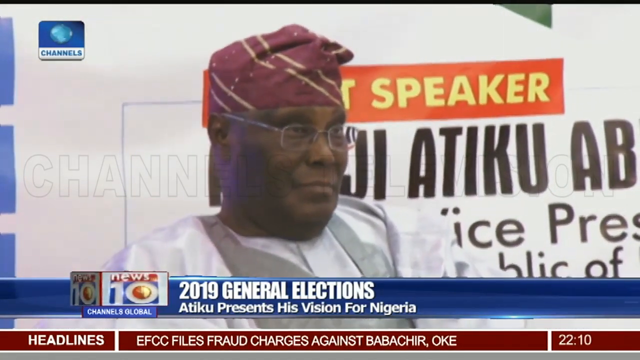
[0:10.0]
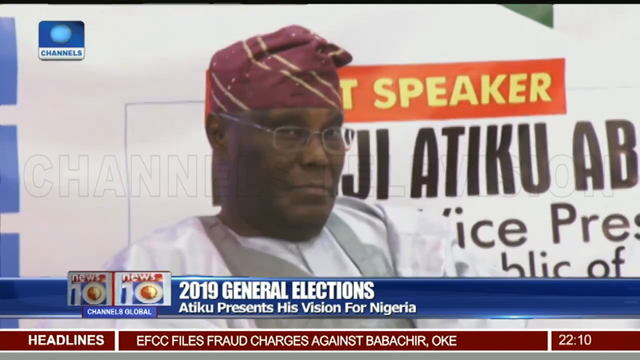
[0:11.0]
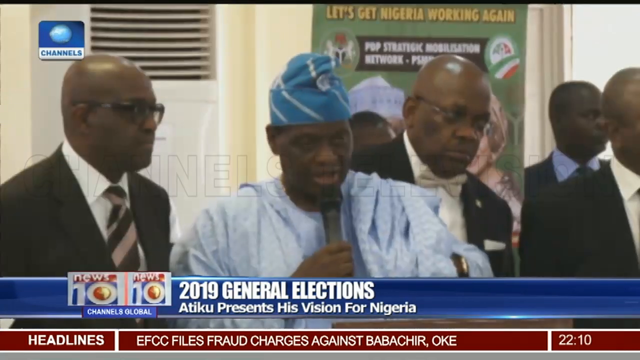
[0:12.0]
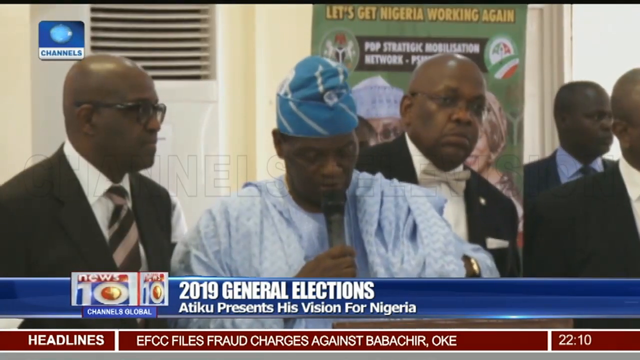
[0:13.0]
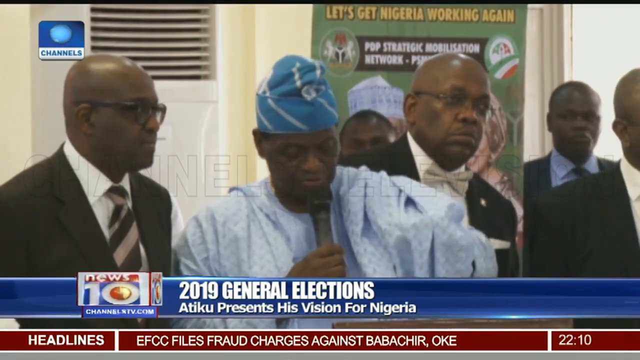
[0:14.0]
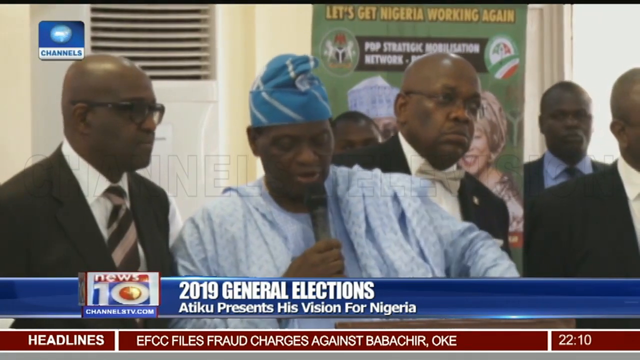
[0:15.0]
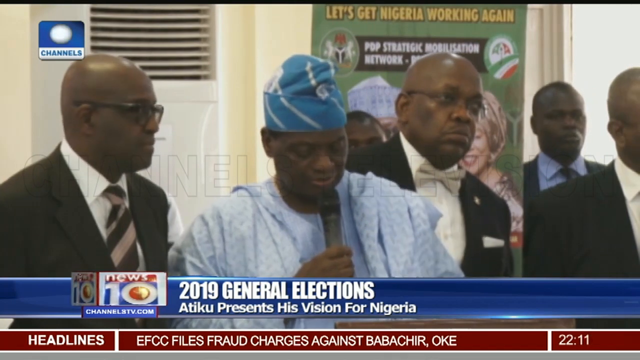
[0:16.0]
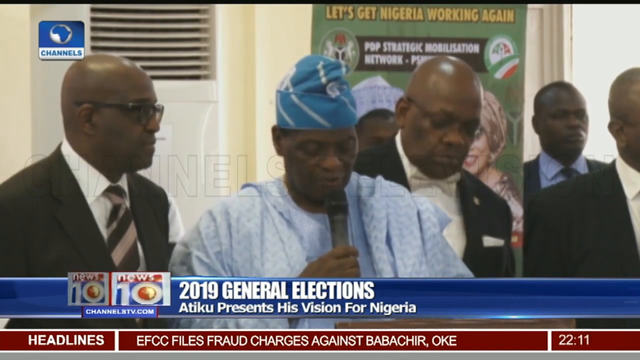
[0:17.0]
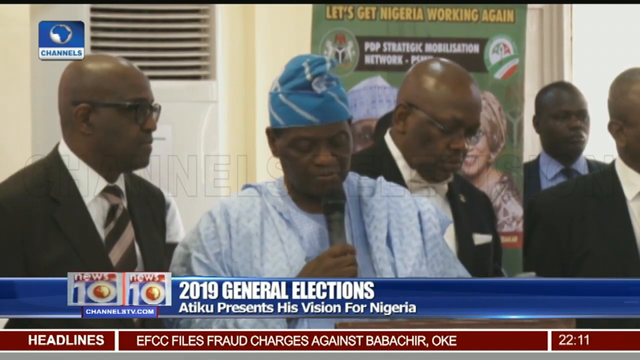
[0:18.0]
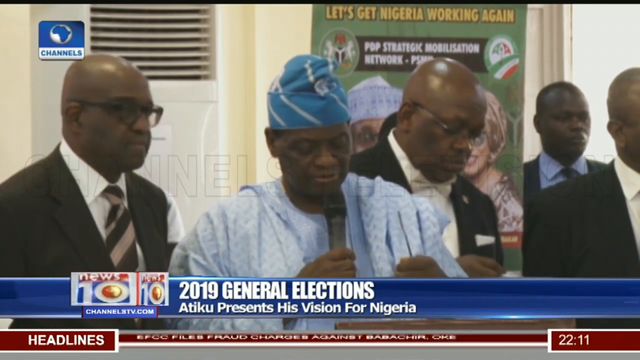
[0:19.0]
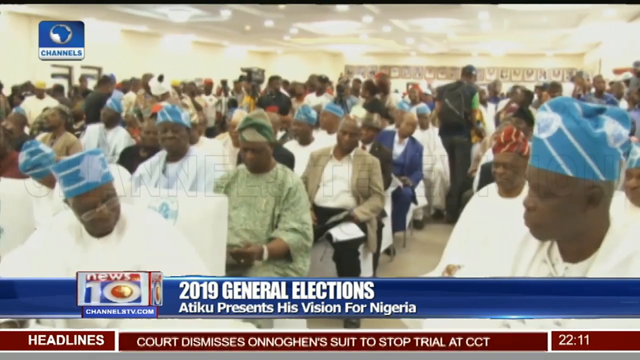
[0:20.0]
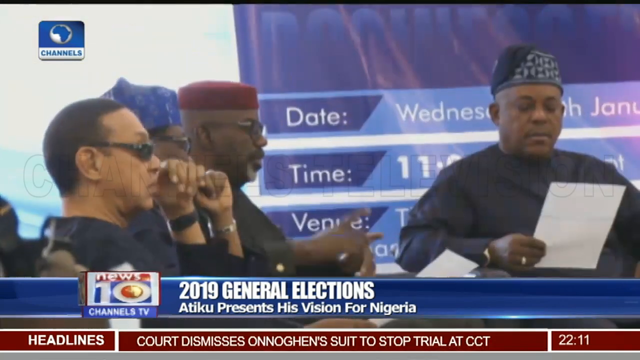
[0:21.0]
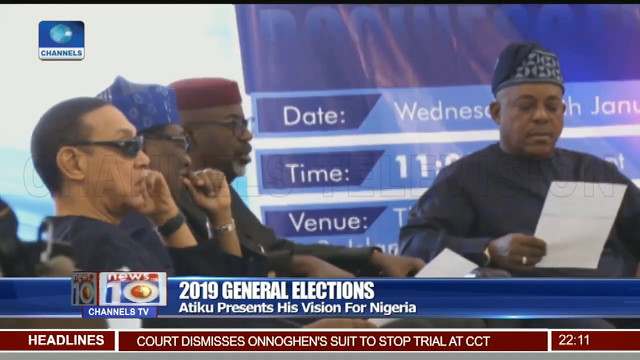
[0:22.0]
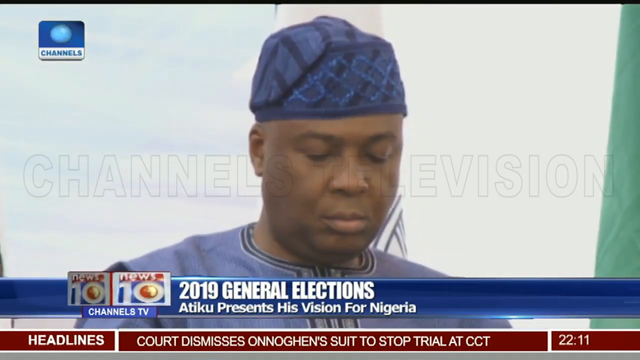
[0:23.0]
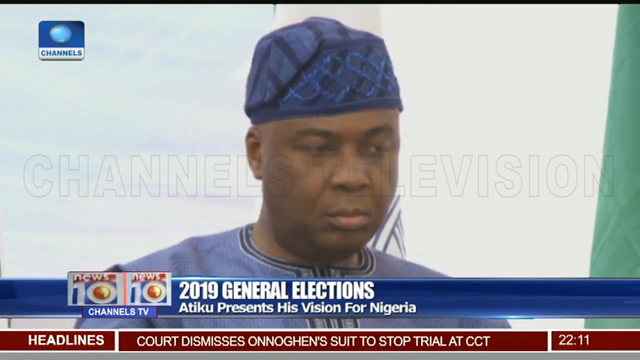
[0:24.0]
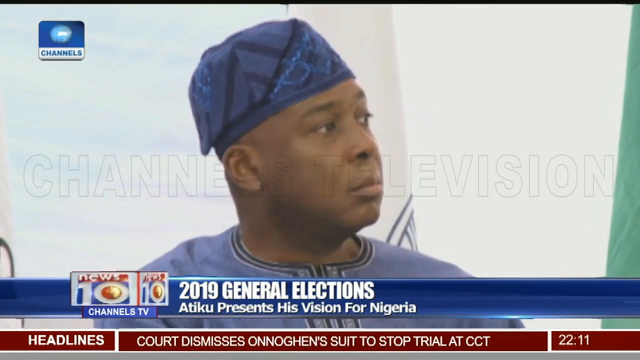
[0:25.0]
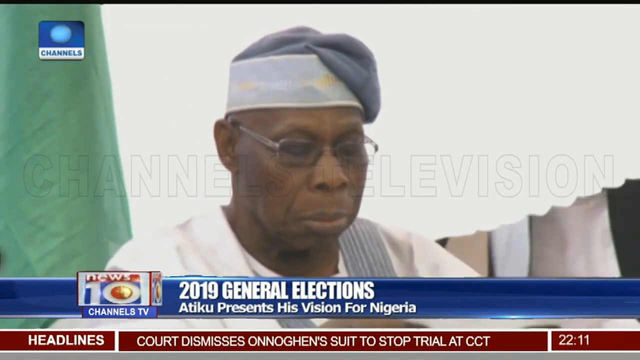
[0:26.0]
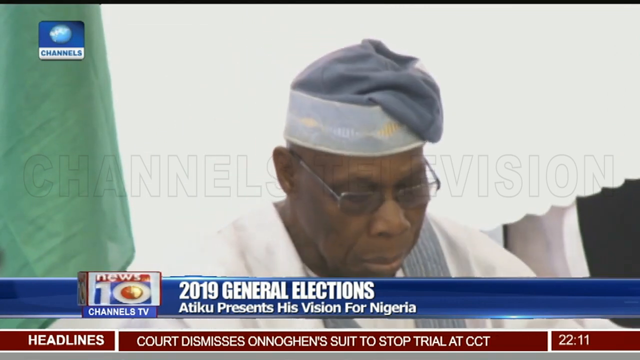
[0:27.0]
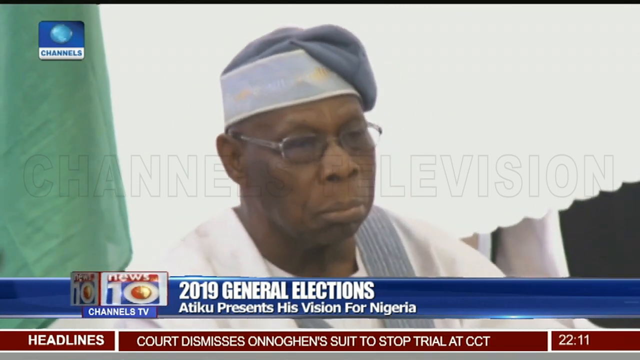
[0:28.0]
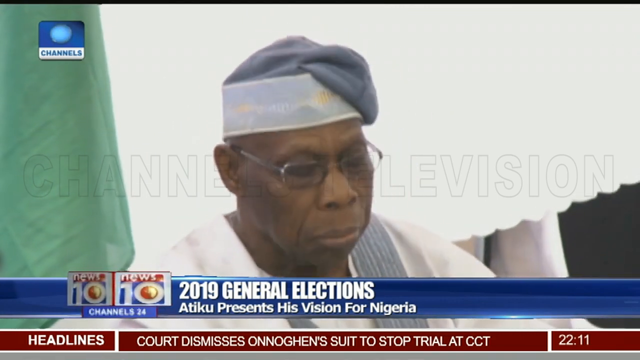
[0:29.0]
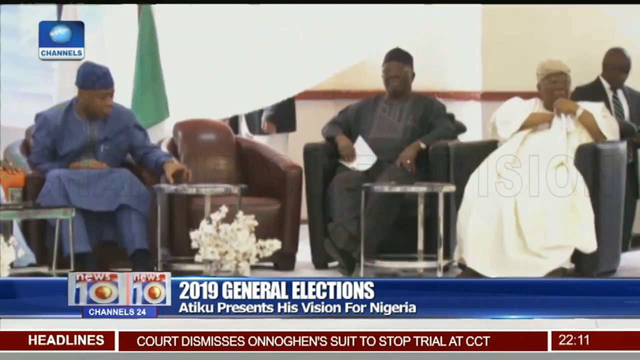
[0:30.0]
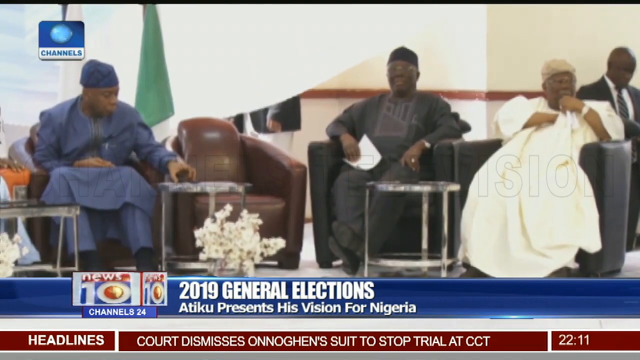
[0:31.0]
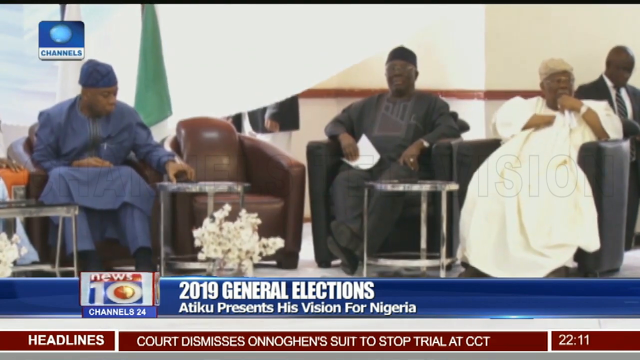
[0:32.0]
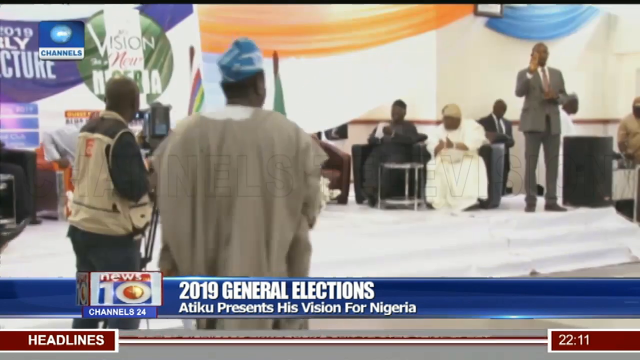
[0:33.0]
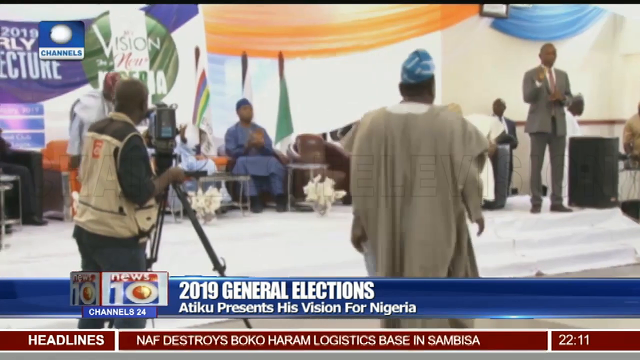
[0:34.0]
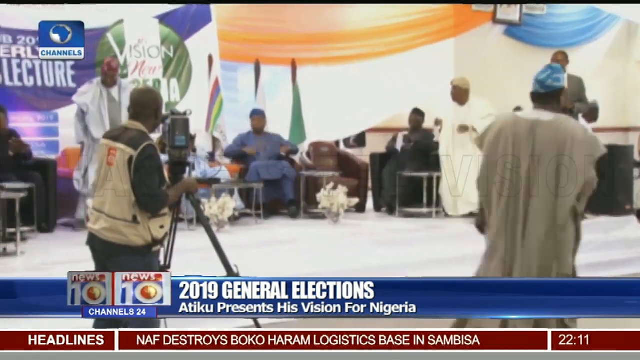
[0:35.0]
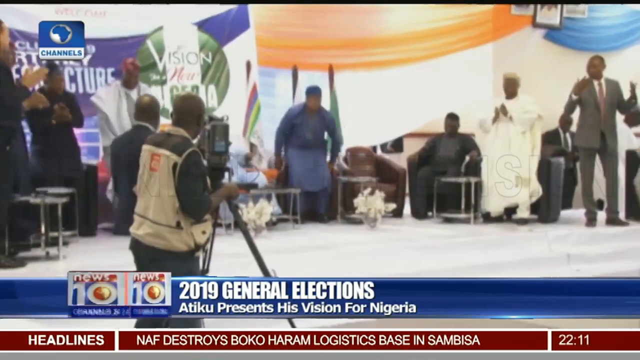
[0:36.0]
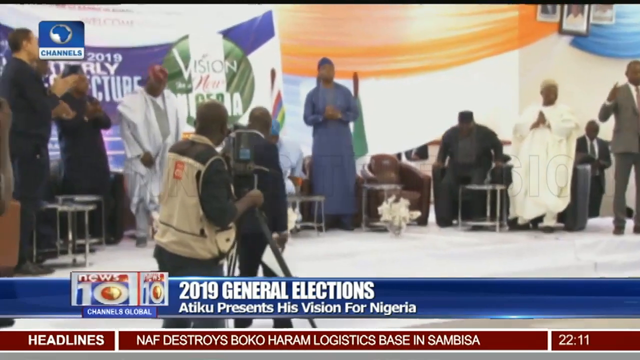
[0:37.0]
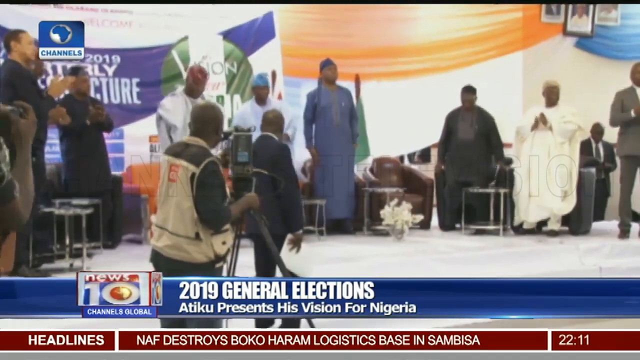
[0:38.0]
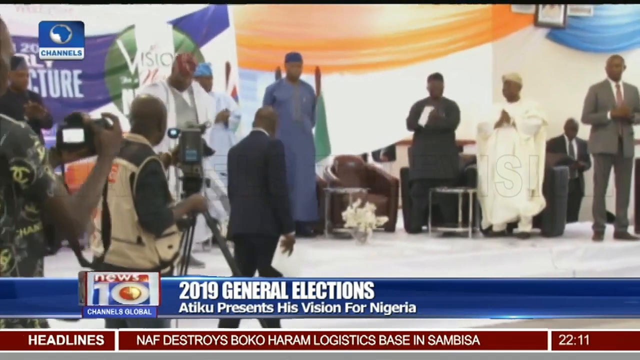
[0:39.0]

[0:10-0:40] A person wears white clothes and an orange cap, and the people at the side wearing the same things appear to be security. One man in a camouflage shirt is the cameraman. A secretary is there writing. The meeting seems to be about the vote. The wall is covered with orange, blue and green shirts.